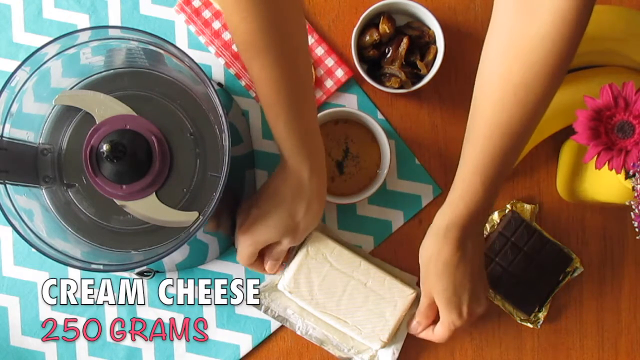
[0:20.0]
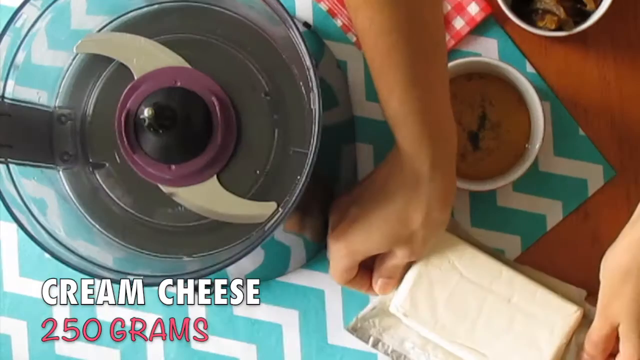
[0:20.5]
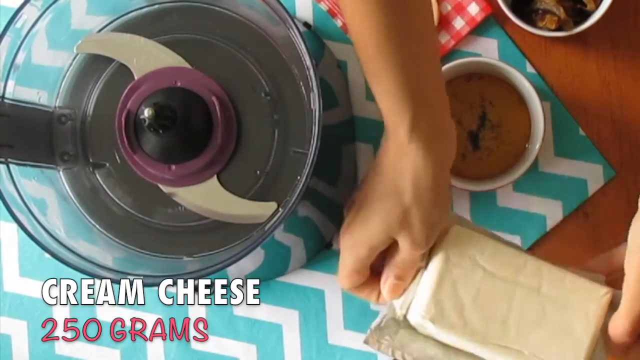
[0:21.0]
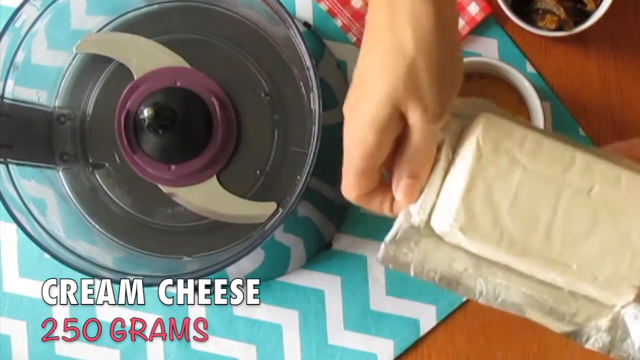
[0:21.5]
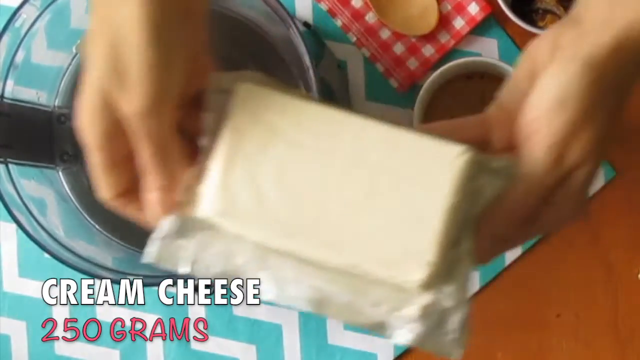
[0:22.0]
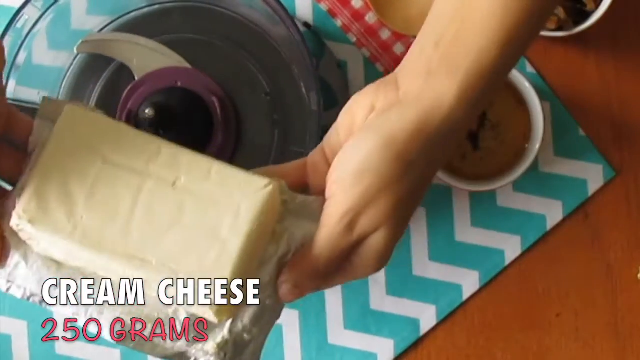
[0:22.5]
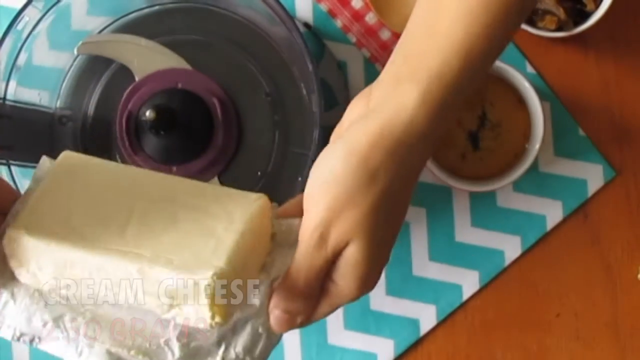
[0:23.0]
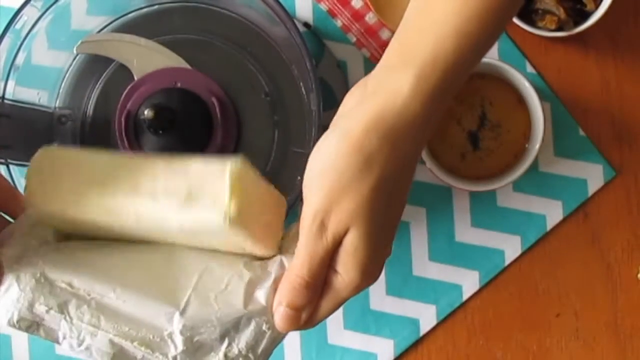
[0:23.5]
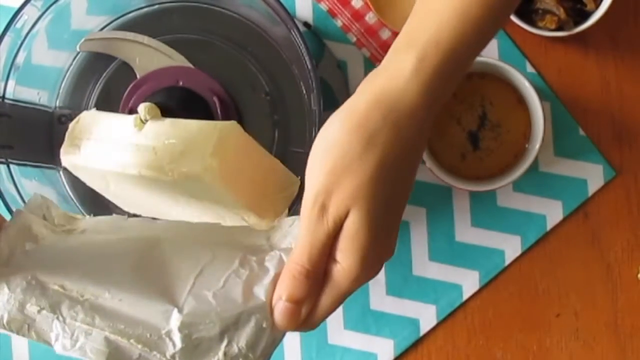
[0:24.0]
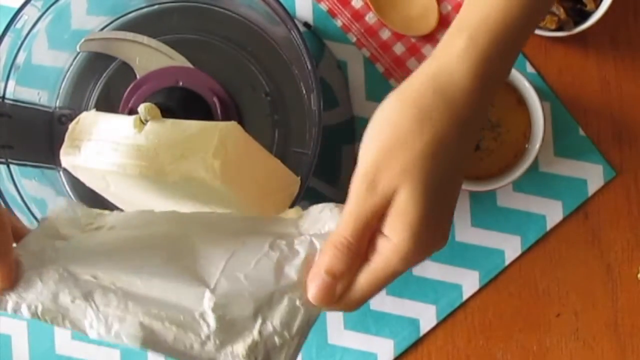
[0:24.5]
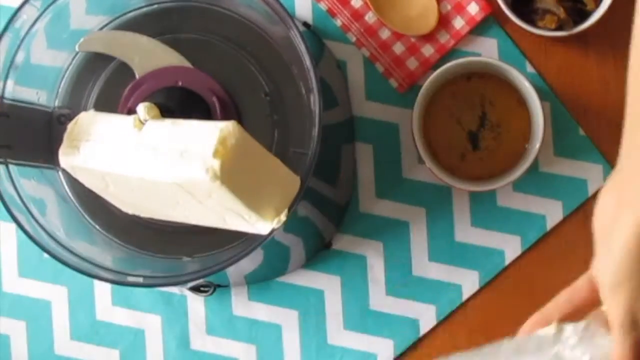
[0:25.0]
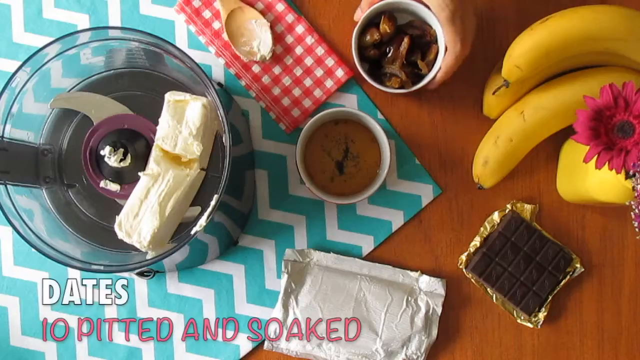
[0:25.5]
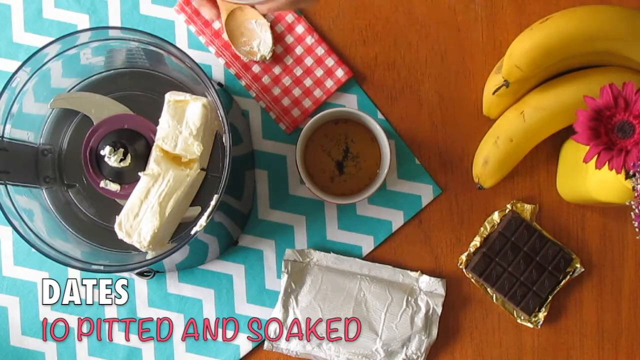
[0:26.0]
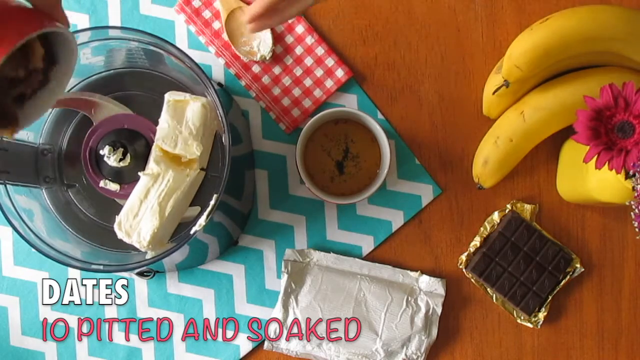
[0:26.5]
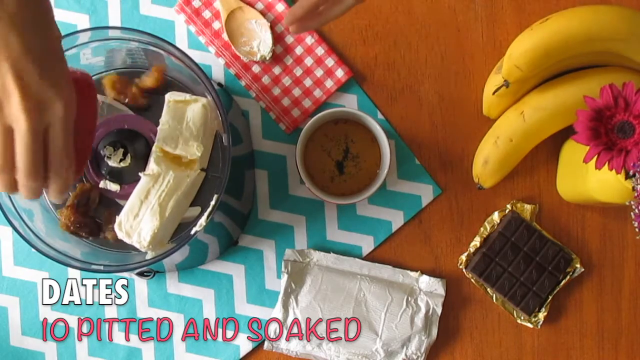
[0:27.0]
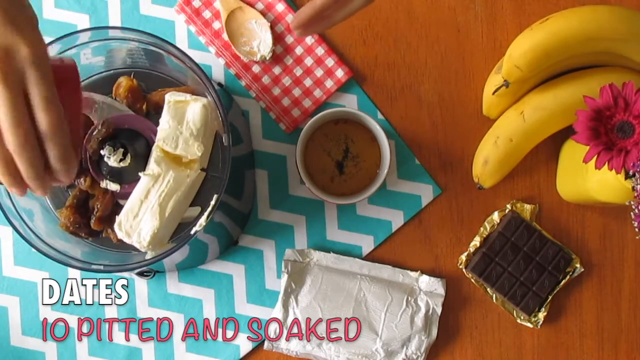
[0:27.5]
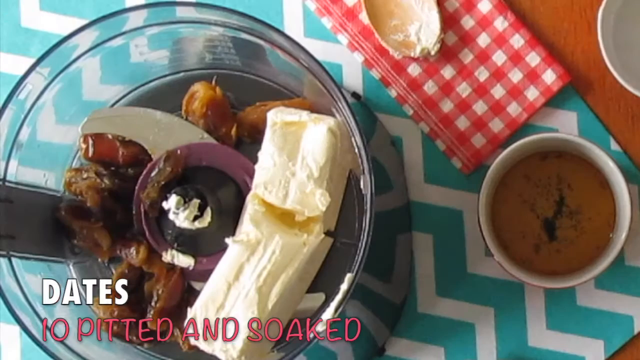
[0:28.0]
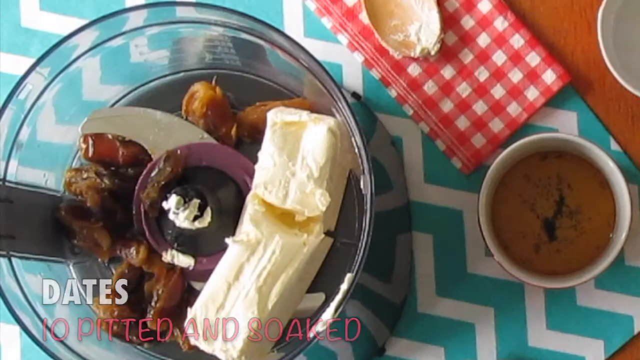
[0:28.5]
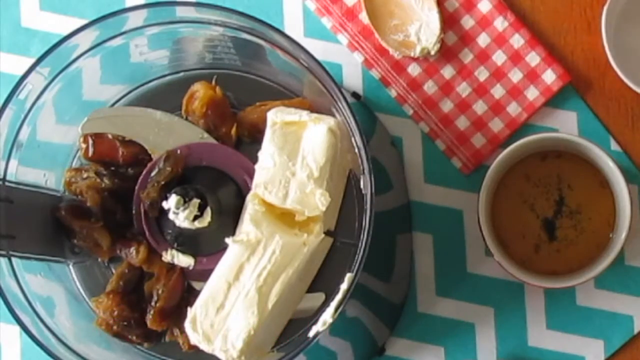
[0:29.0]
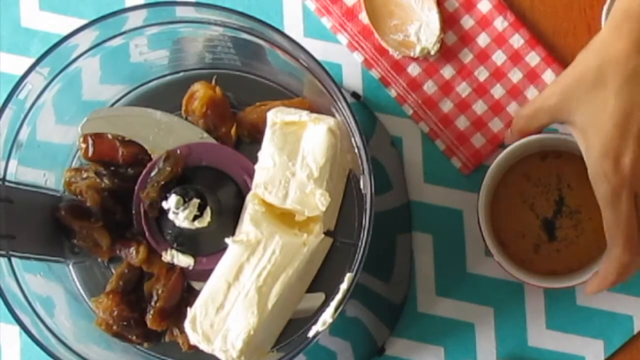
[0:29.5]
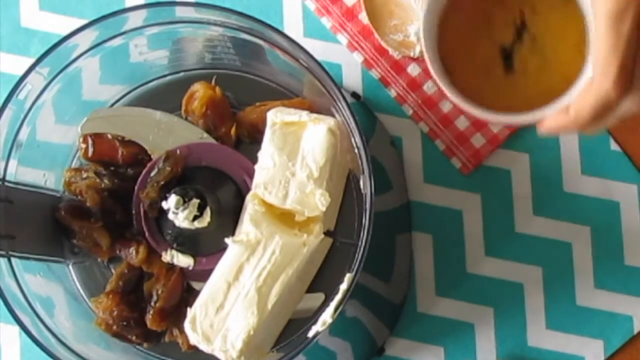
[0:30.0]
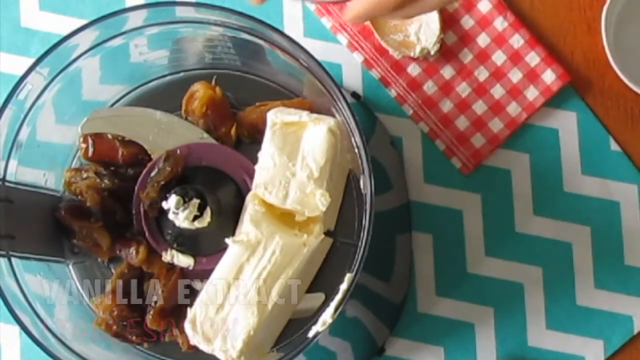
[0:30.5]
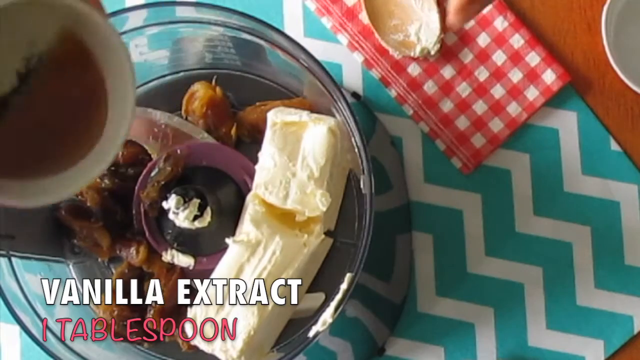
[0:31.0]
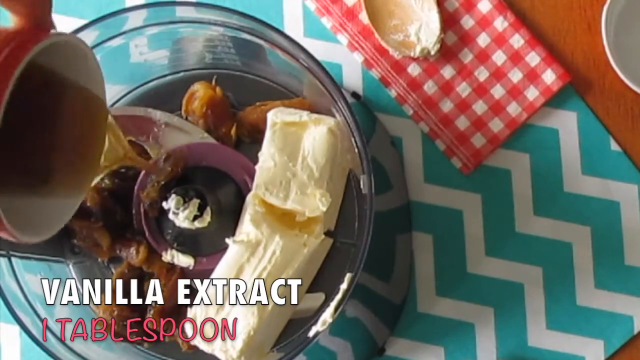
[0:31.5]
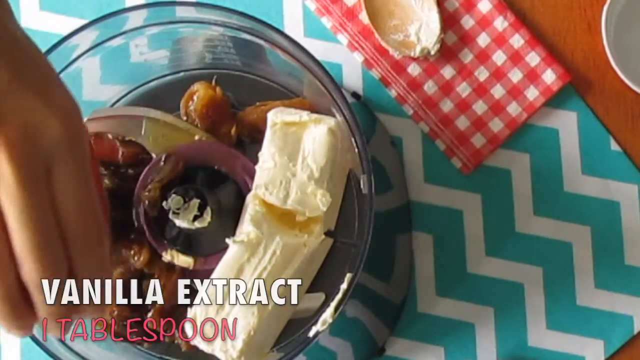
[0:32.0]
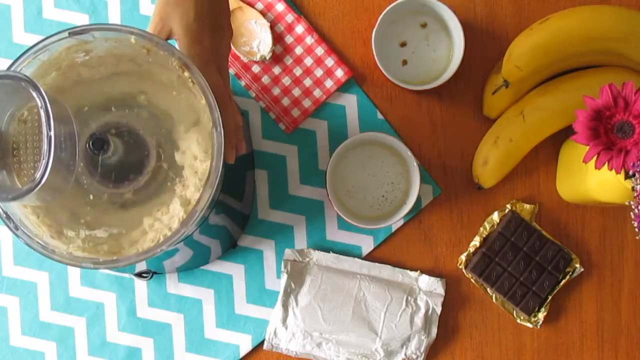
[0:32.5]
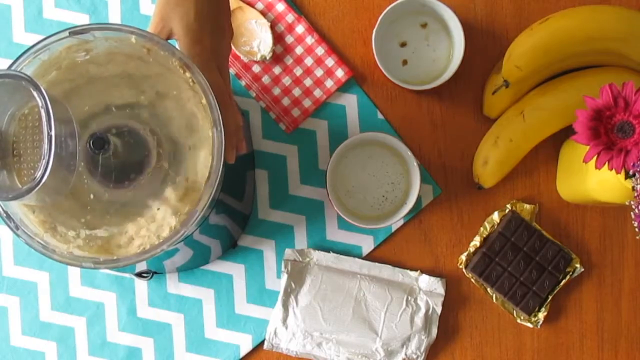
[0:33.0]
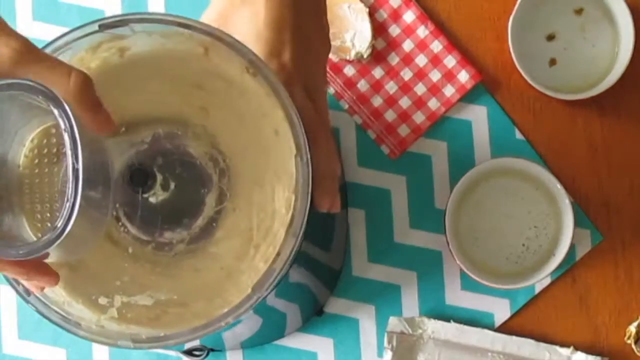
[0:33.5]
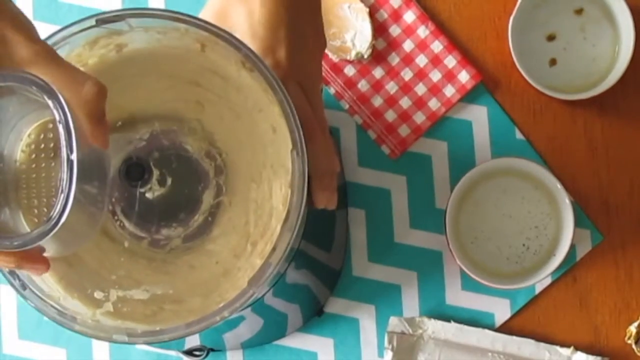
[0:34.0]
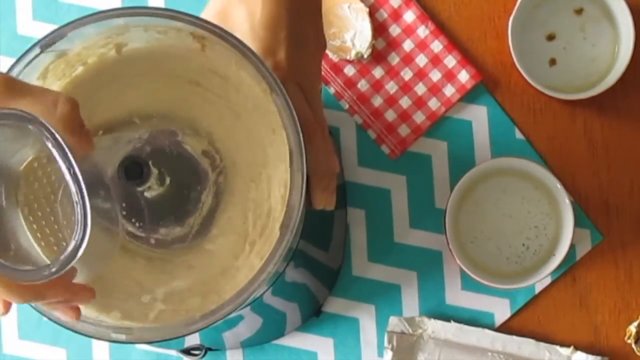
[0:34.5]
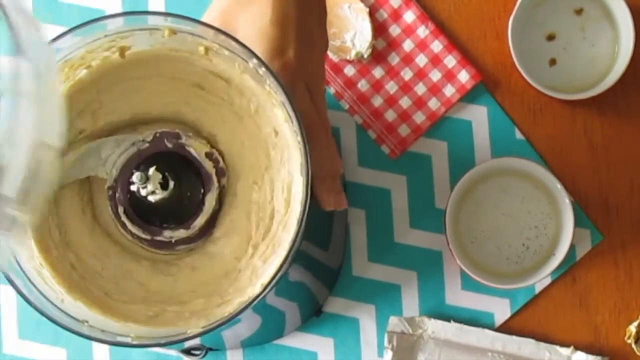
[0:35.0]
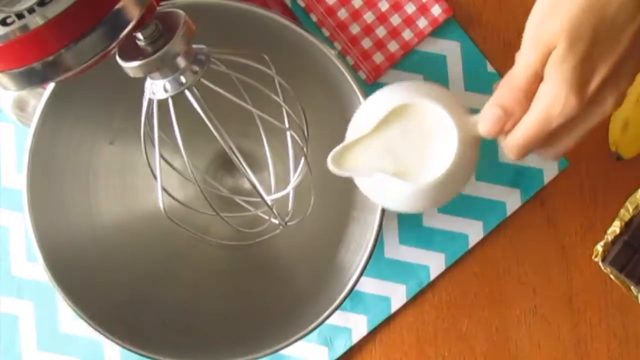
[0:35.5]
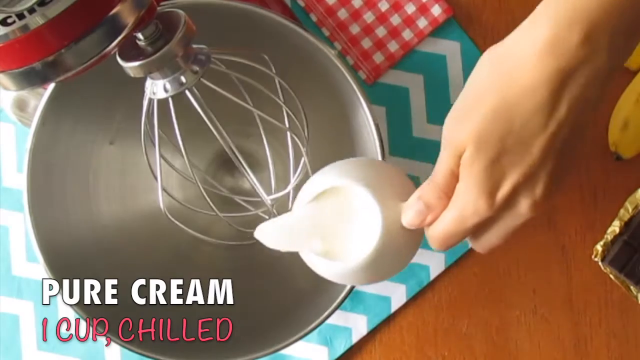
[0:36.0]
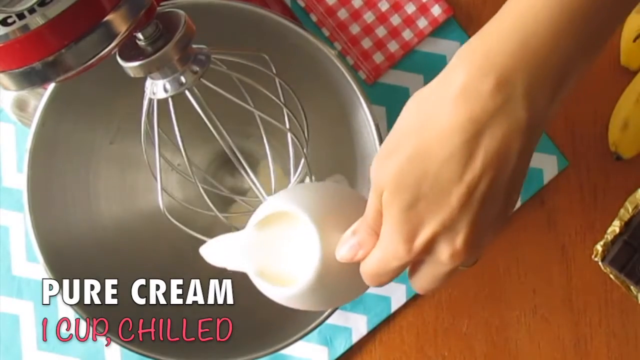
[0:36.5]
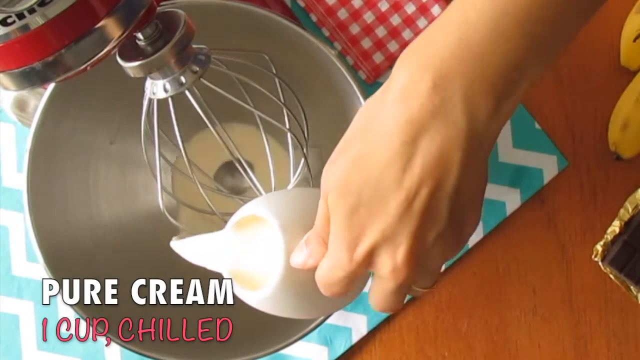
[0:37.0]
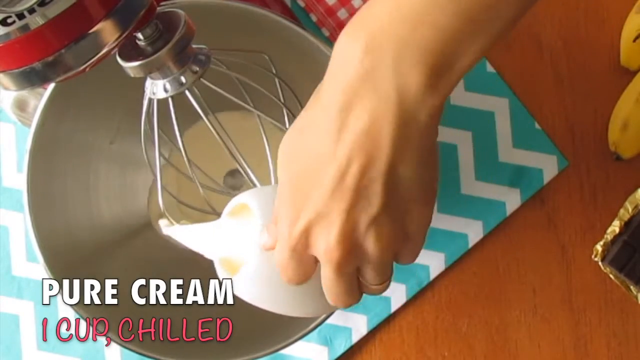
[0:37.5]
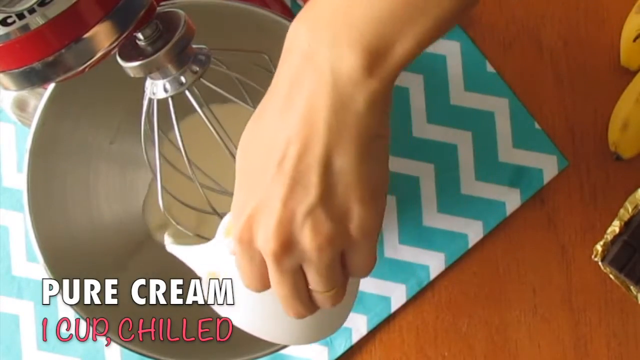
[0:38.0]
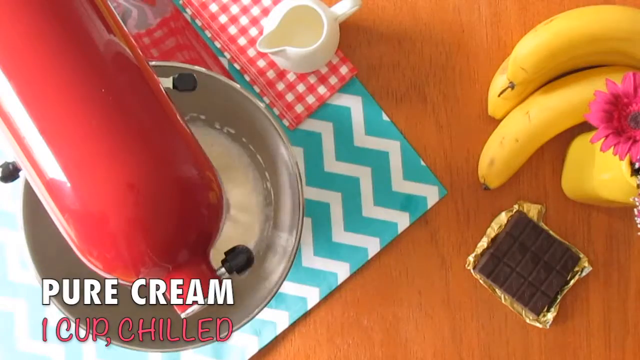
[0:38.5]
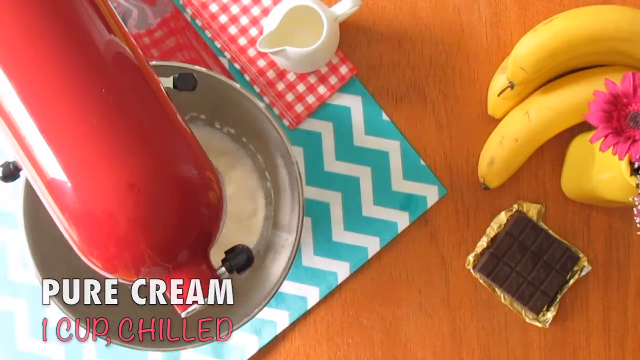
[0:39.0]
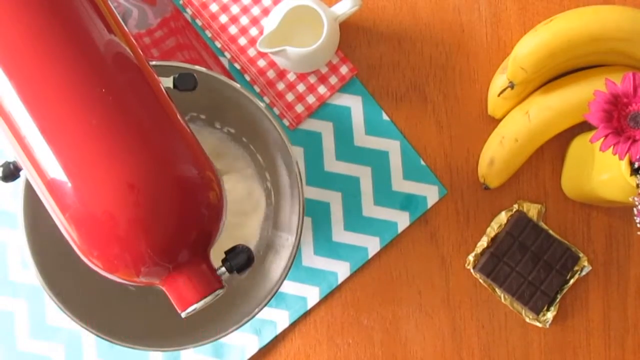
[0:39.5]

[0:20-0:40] The wooden table has a blue and white tablecloth with a wavy, almost chevron pattern, a mixer in the corner and some ingredients in pots. A wooden spoon lies on a red and white gingham napkin, and some bananas and chocolate are in the shot. A pink gerbera flower is at the side of some hands that pick up the cream cheese. White on-screen text identifies it as cream cheese and says "250 grams". The hands pick up the full block of cream cheese and empty it into the mixer. Next the dates are emptied into the mixer, followed by vanilla extract, and everything is mixed together. The video cuts to a whisk being filled with pure cream, probably double cream, which is then whisked up.